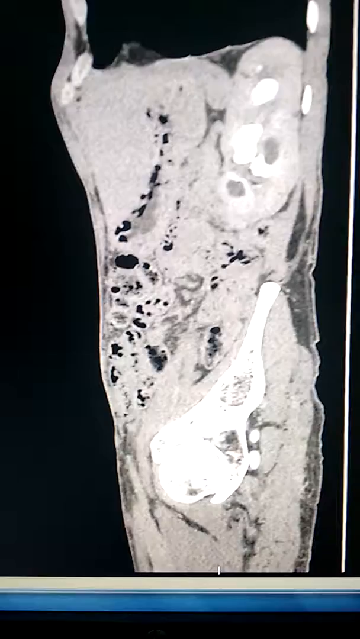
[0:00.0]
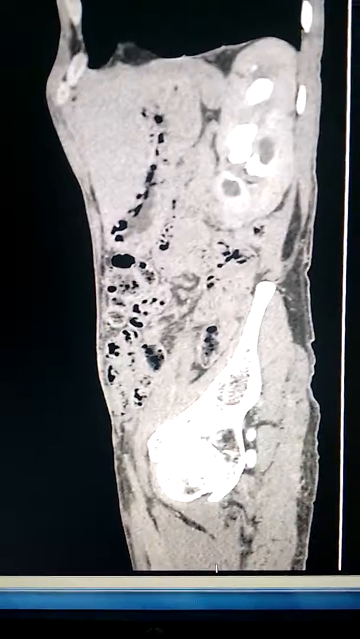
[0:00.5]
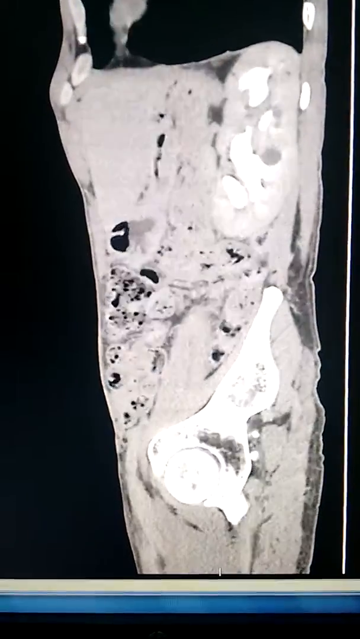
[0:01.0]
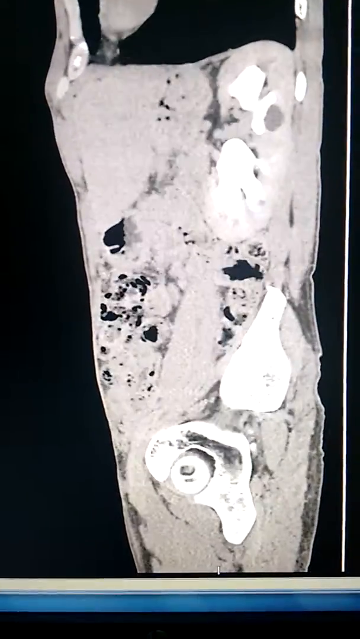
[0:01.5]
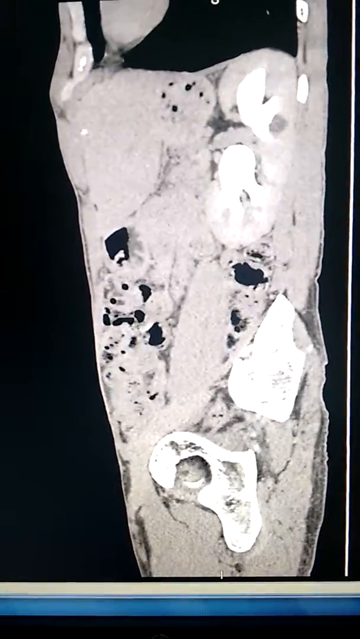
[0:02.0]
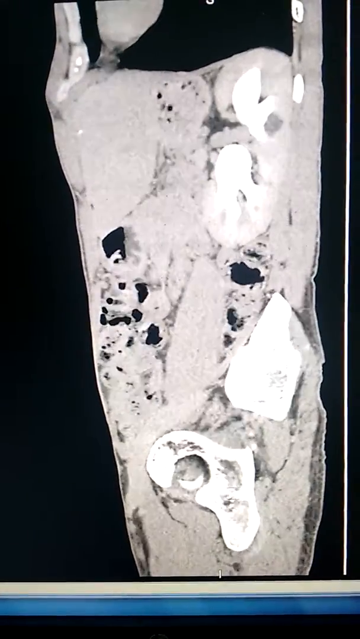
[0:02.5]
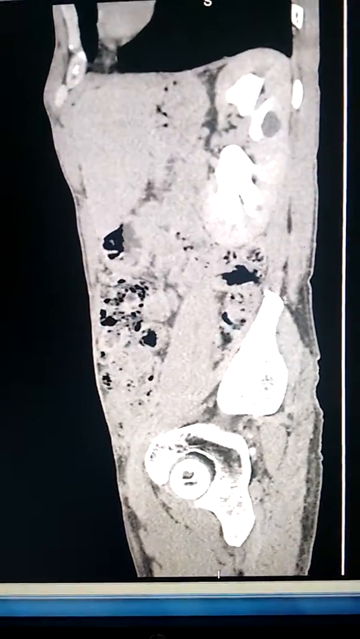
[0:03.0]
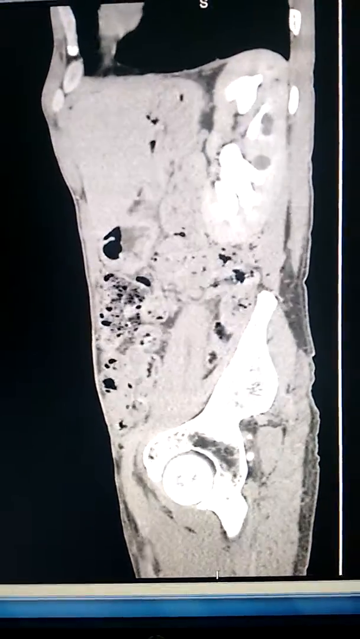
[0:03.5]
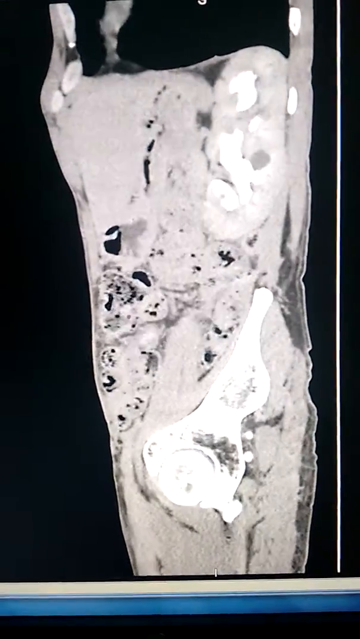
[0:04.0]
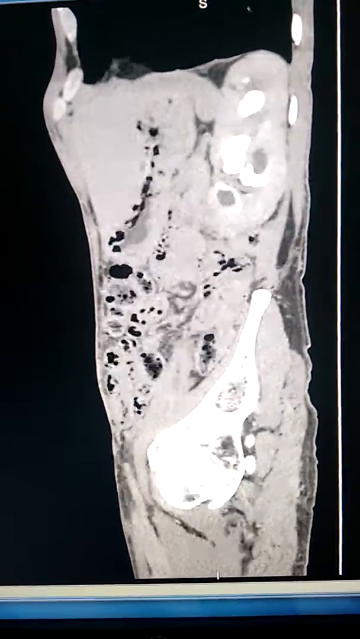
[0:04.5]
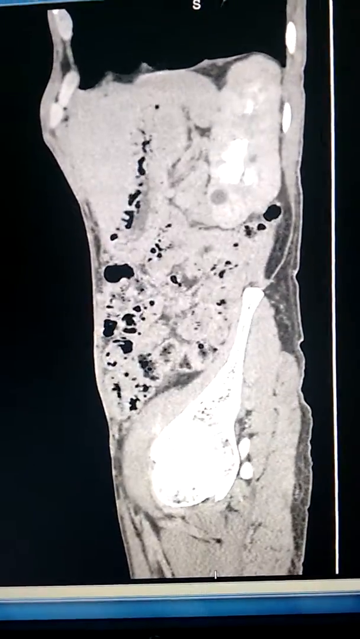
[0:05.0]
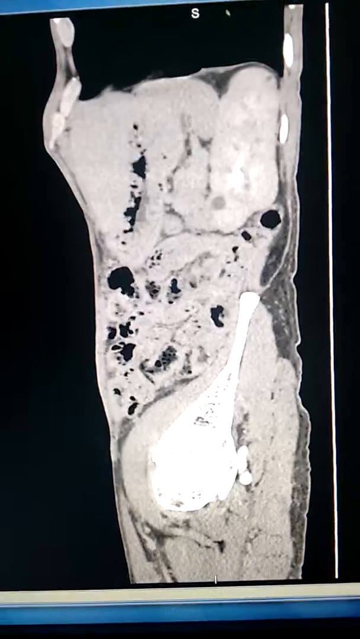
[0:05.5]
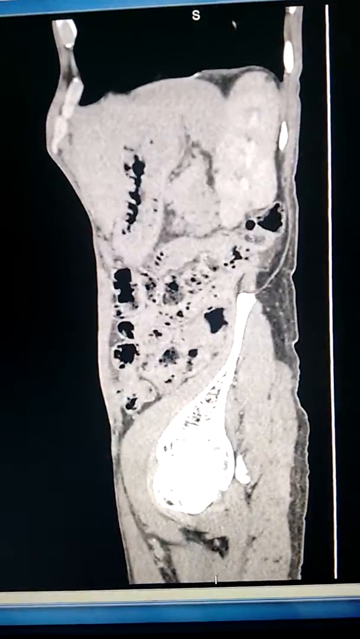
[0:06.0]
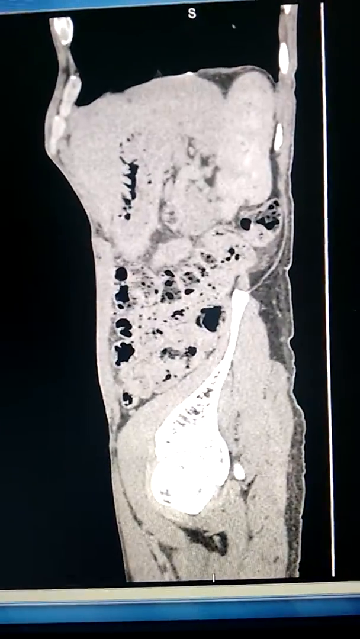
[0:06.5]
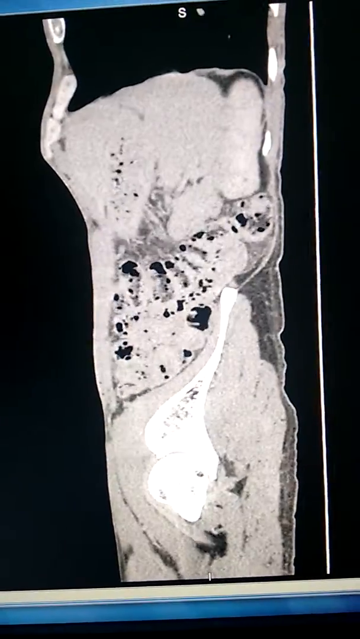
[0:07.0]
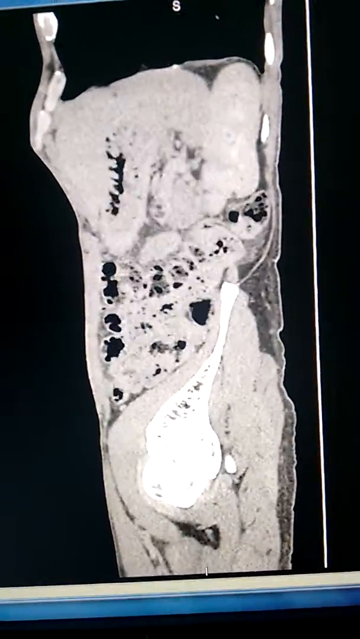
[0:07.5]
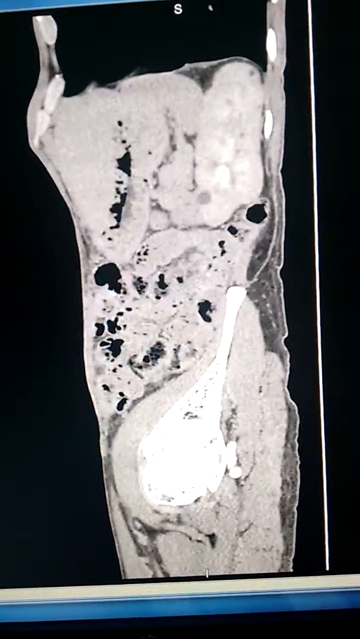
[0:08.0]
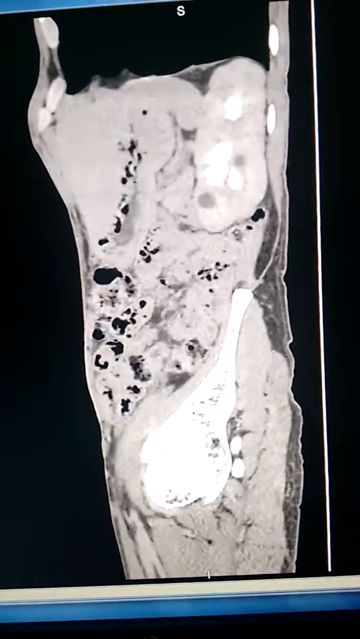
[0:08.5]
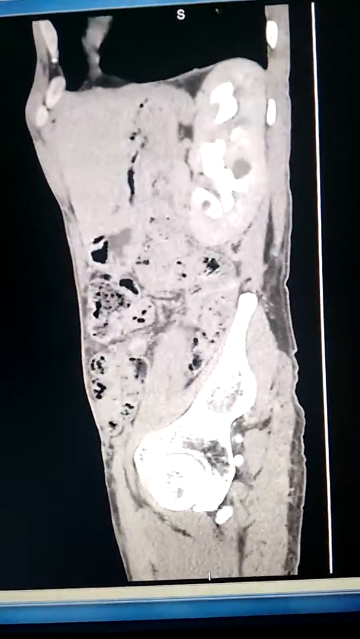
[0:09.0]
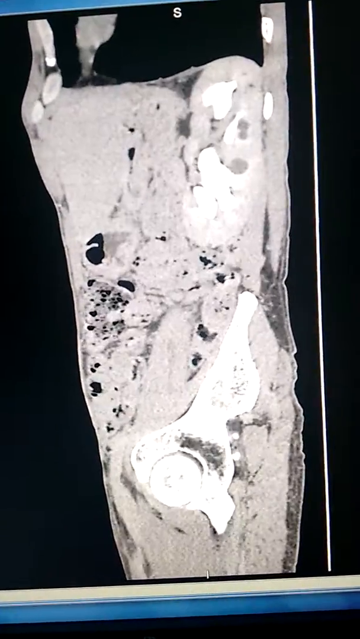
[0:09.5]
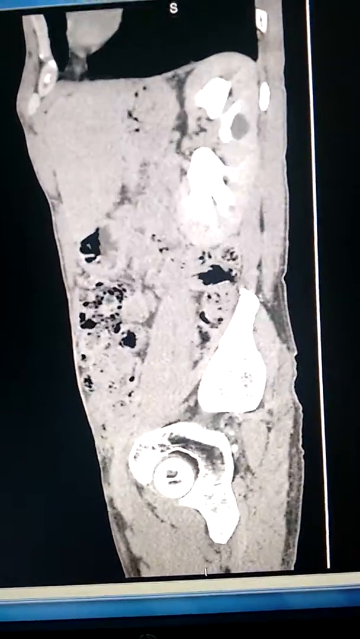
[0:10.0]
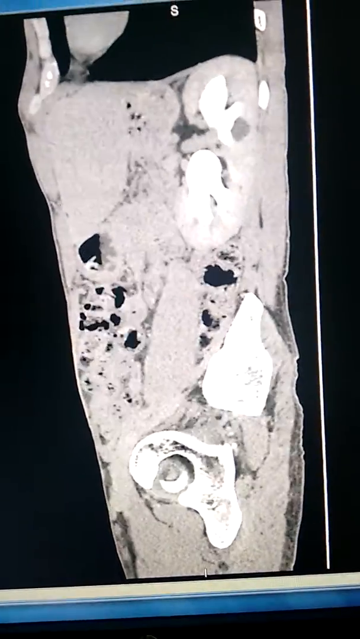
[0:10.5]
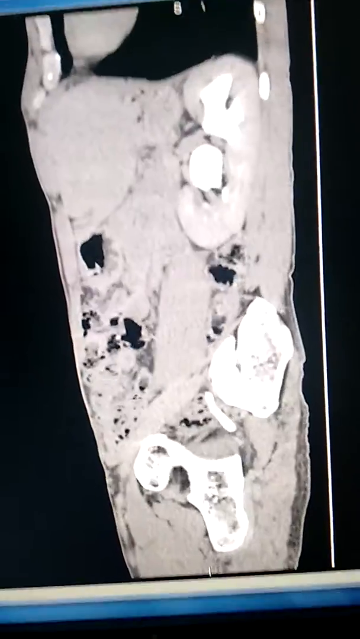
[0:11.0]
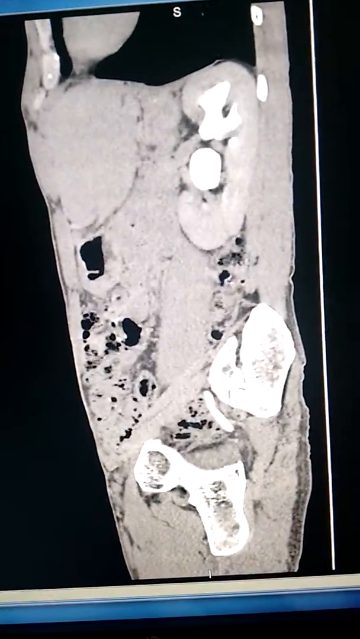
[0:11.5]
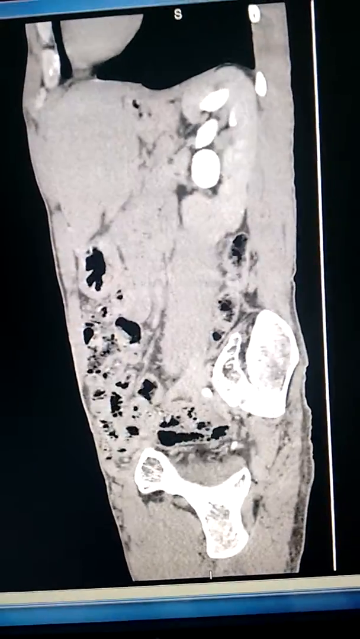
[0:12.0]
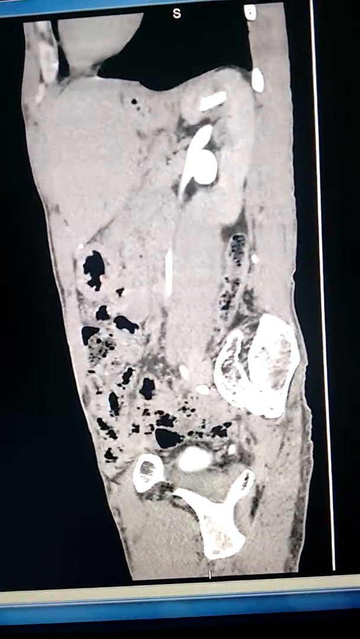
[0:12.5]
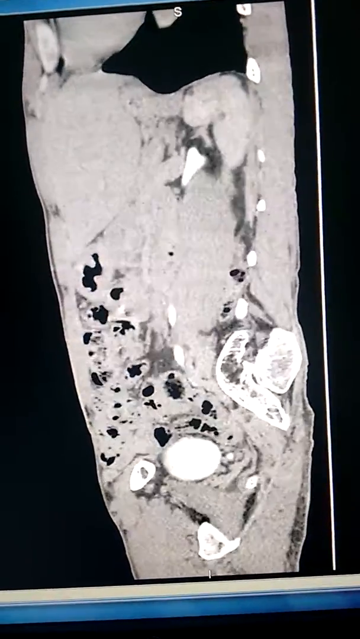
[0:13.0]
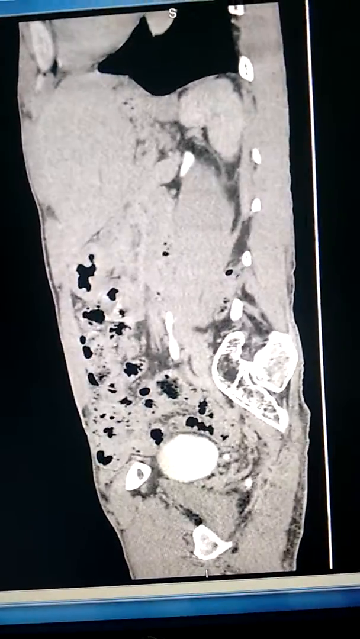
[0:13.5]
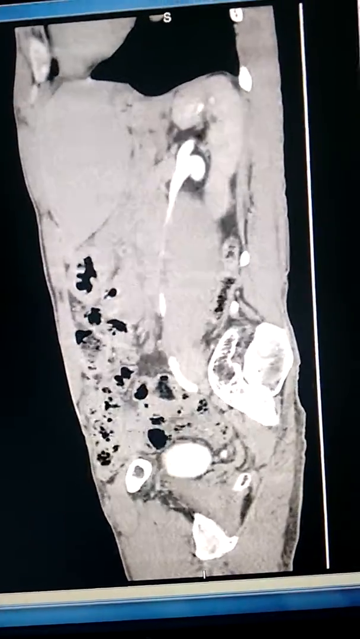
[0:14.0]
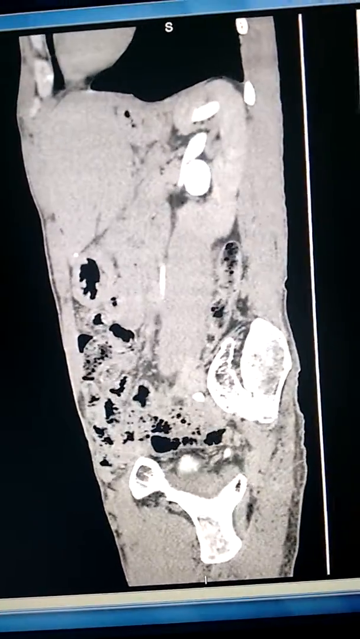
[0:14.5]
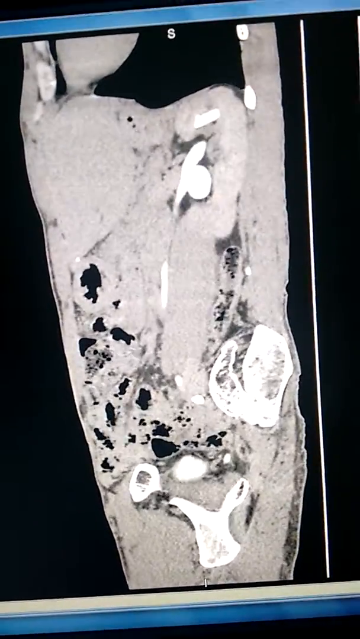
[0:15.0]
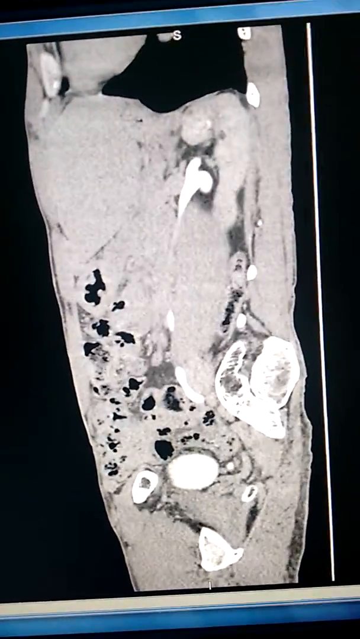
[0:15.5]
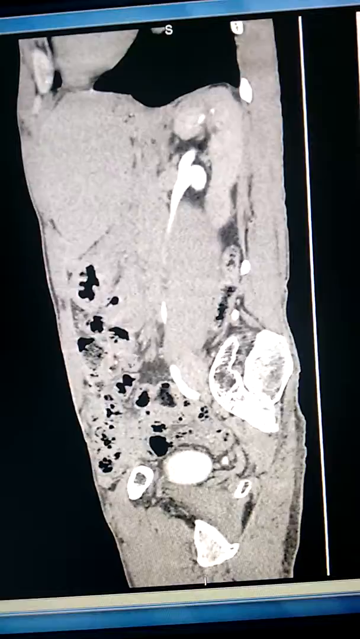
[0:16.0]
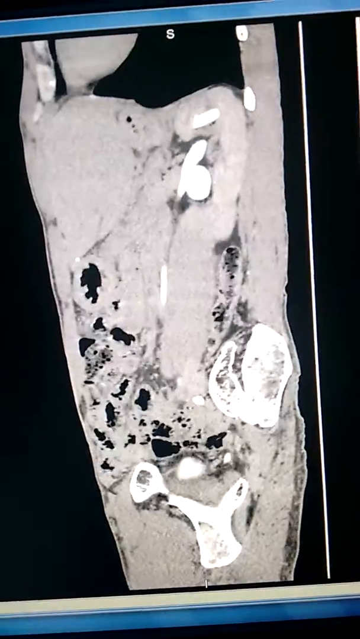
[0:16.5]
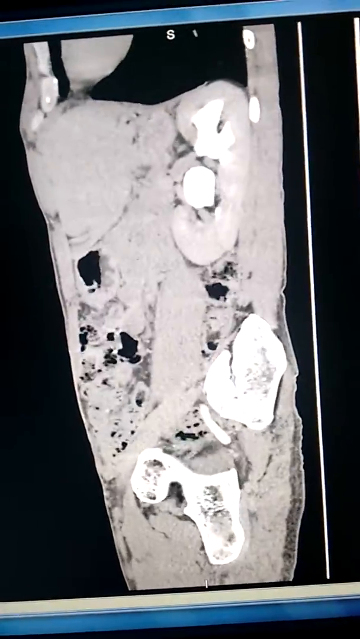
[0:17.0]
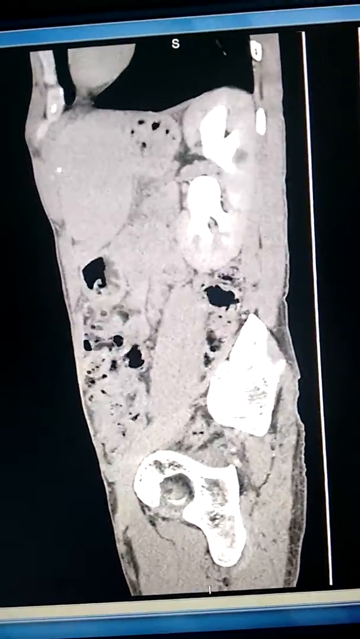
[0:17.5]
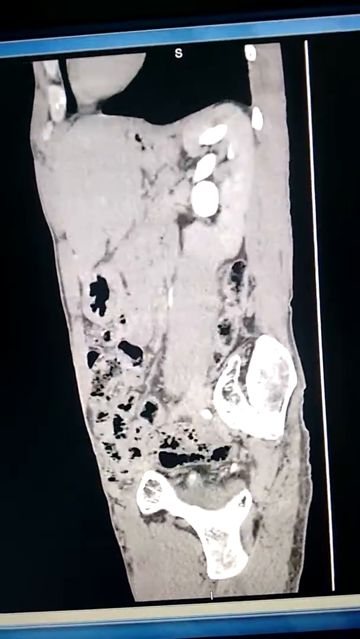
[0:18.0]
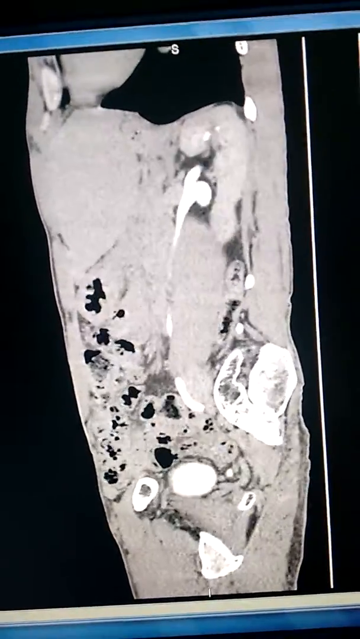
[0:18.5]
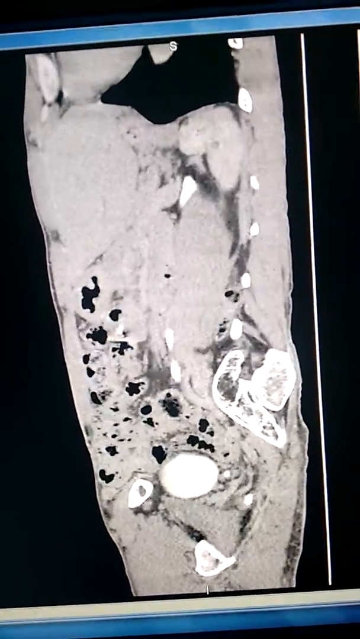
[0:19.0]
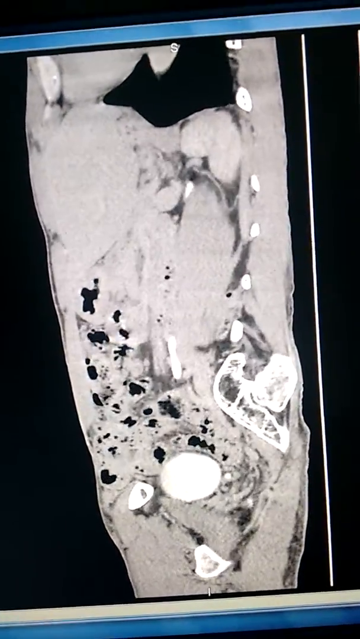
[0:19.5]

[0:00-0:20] The video seems to show an x-ray, some sort of CT scan of what looks like it could be someone's leg or arm; it is a long area and could be the area of someone's knee. It is a recording of a screen showing the exam in video format, with moving white and grey shapes that look like they define the muscles inside the leg. The scan goes through different depths of the leg, and there are some kind of holes in the muscles. Where it is filled the most, the colour is a brighter white; there is also grey, and the background is fully black. A white letter S is at the top, and some of the computer's blue is visible.